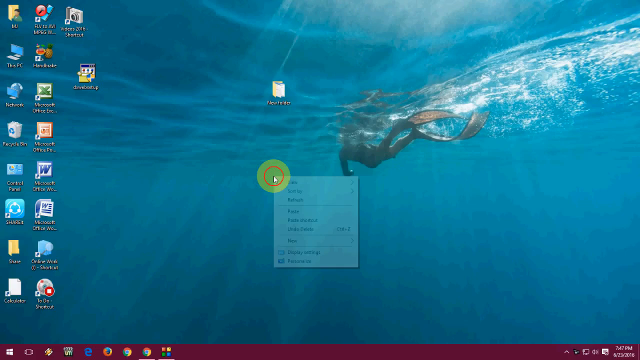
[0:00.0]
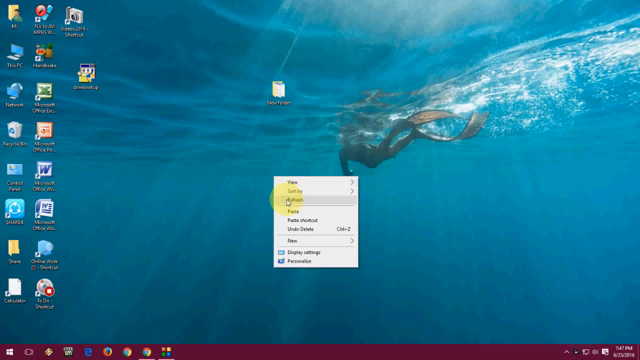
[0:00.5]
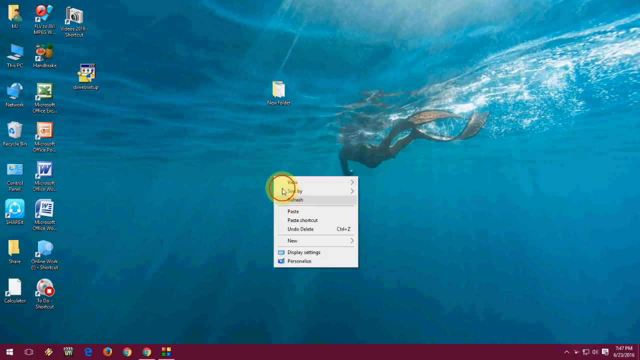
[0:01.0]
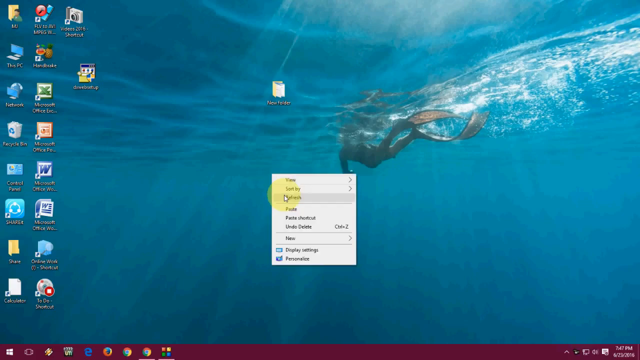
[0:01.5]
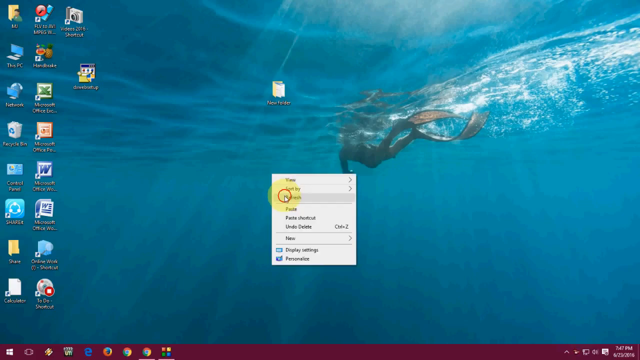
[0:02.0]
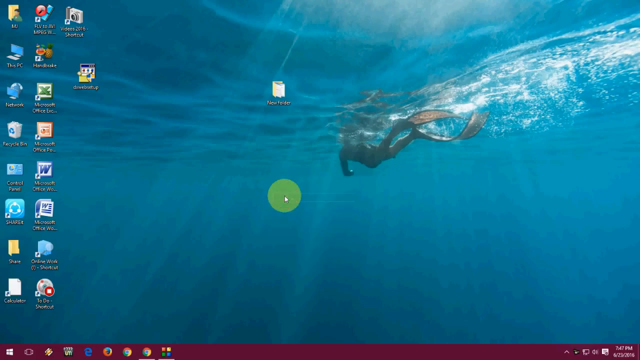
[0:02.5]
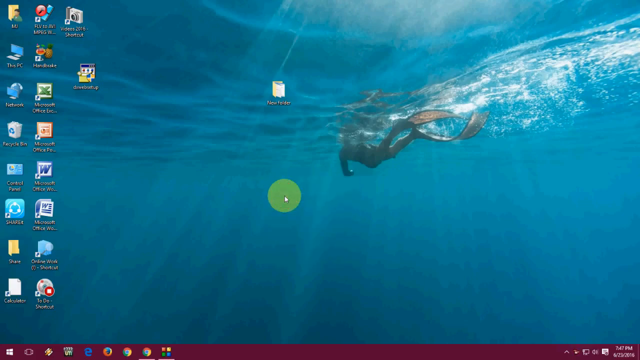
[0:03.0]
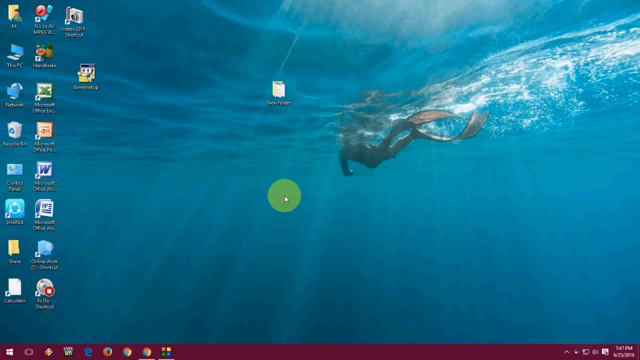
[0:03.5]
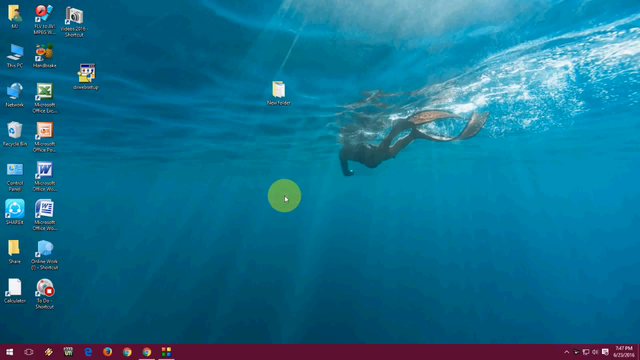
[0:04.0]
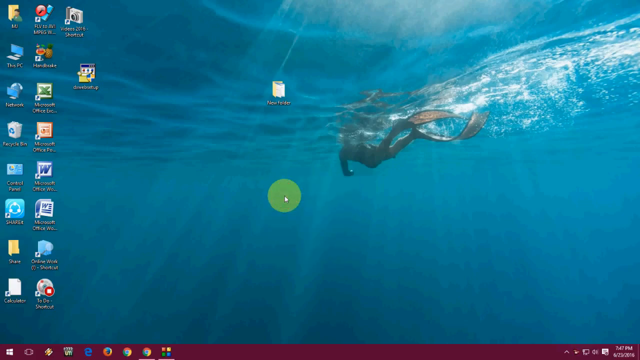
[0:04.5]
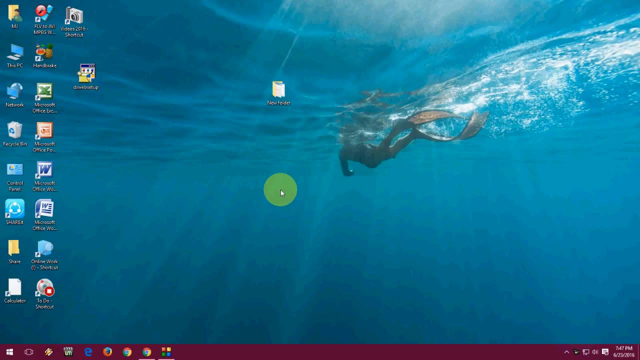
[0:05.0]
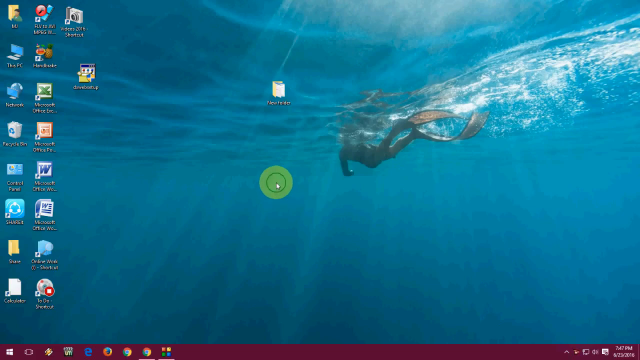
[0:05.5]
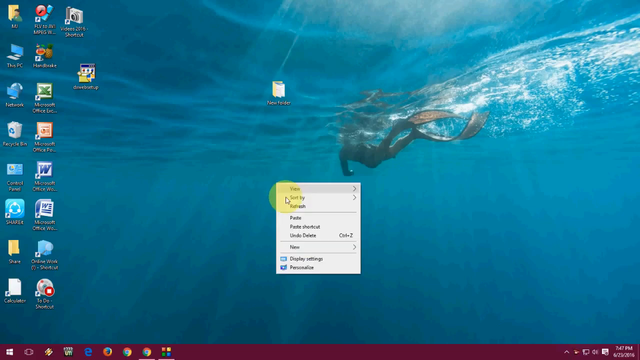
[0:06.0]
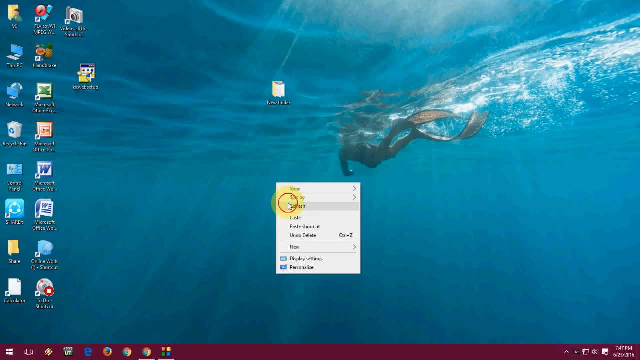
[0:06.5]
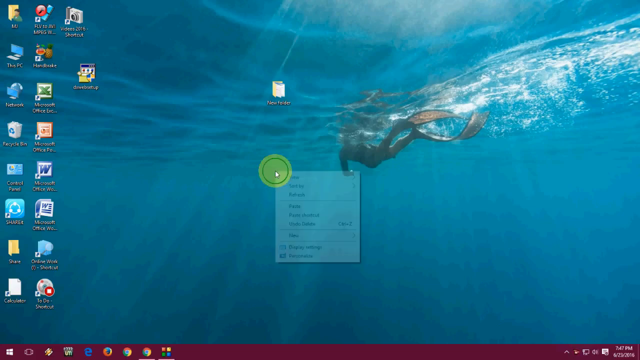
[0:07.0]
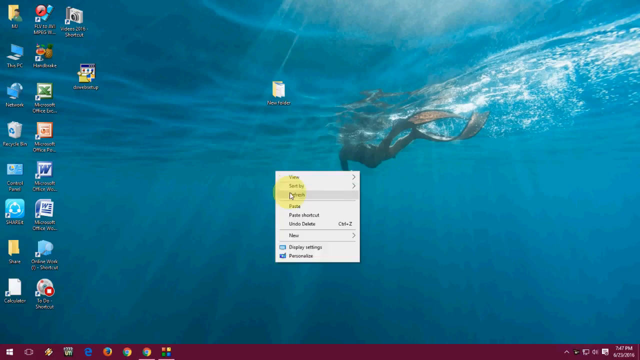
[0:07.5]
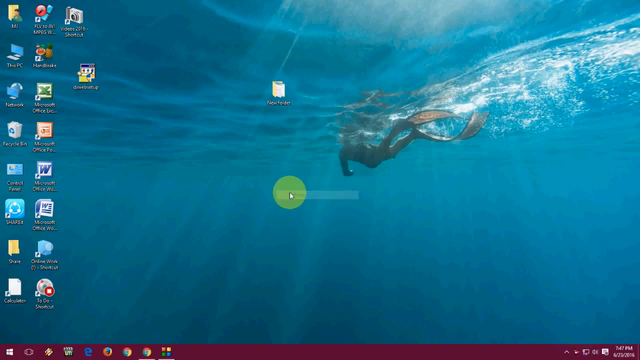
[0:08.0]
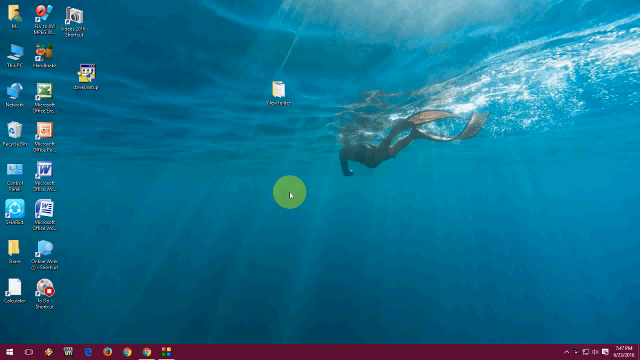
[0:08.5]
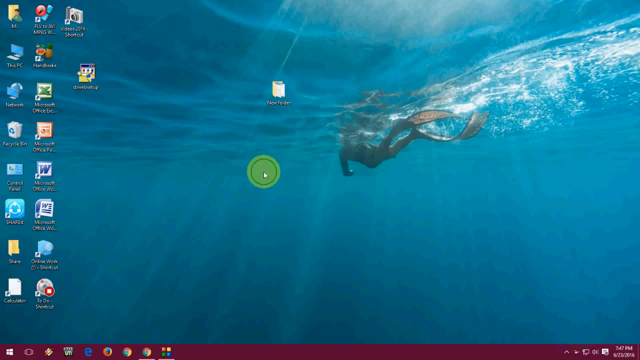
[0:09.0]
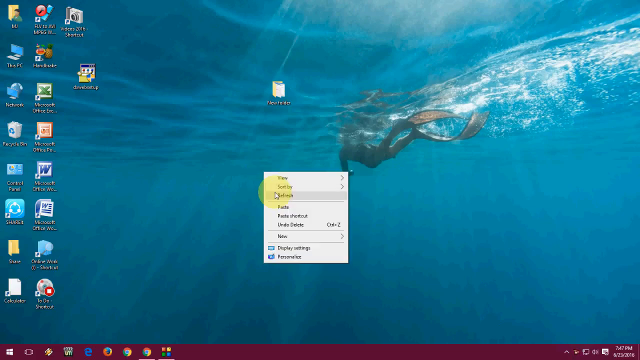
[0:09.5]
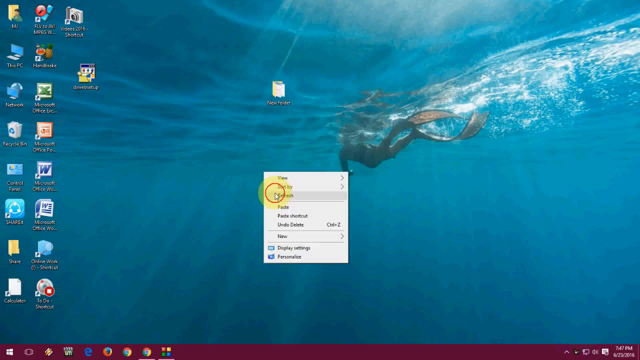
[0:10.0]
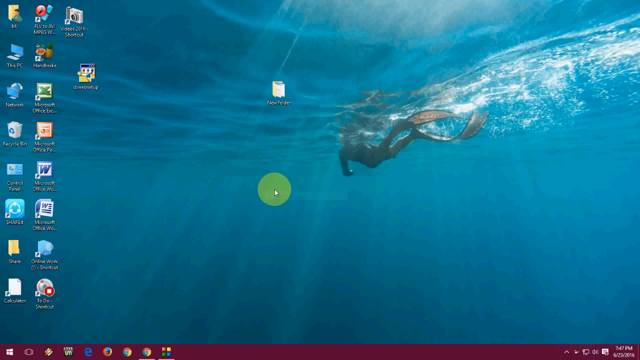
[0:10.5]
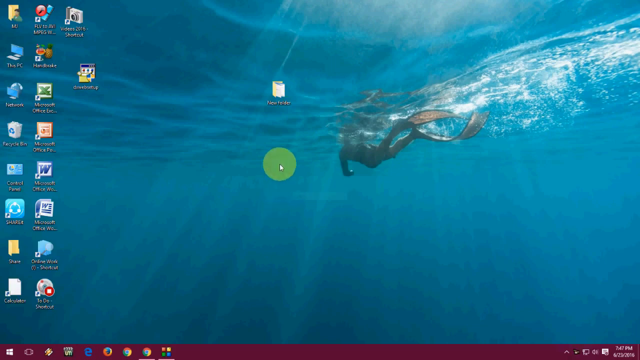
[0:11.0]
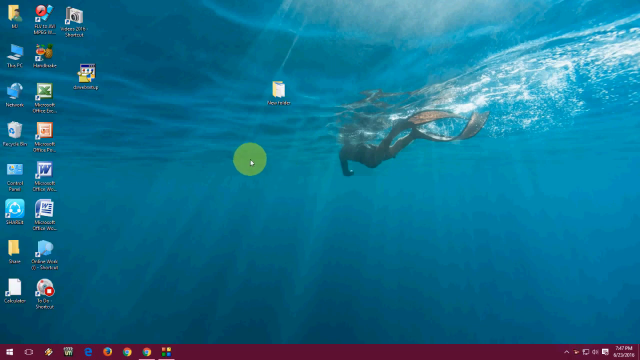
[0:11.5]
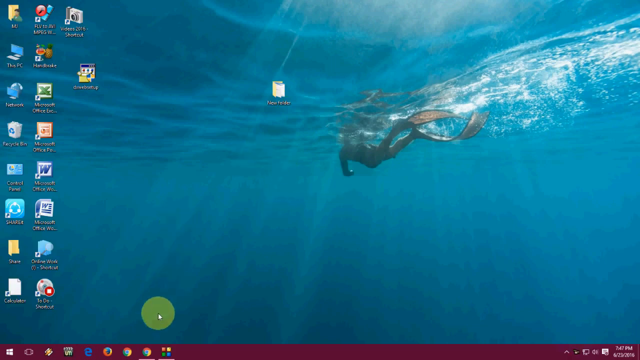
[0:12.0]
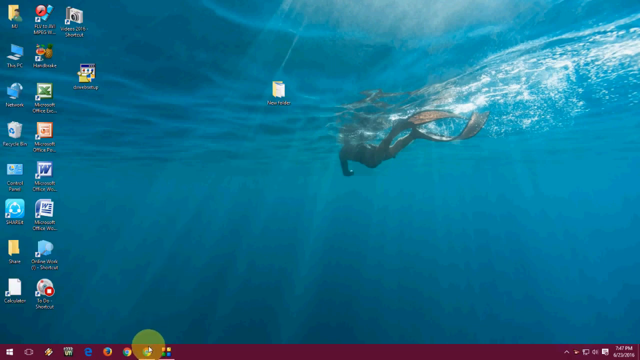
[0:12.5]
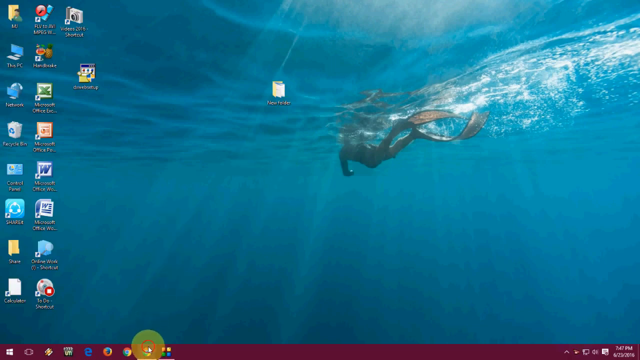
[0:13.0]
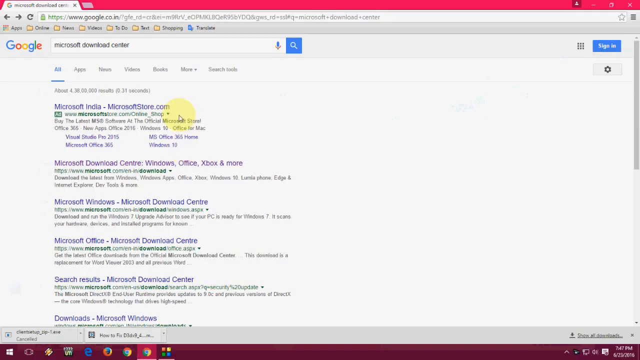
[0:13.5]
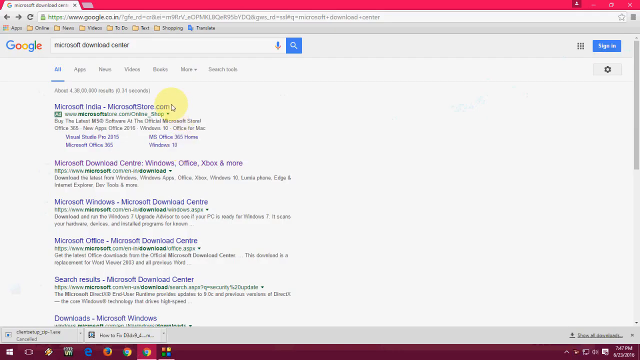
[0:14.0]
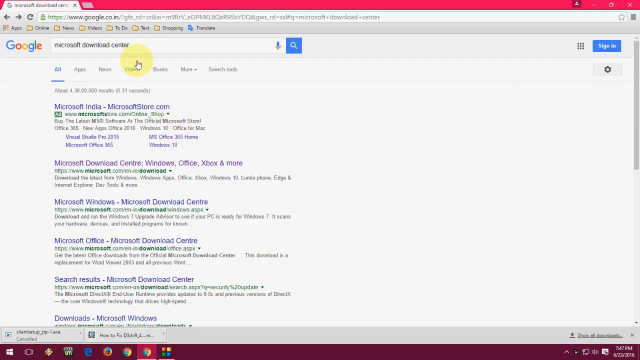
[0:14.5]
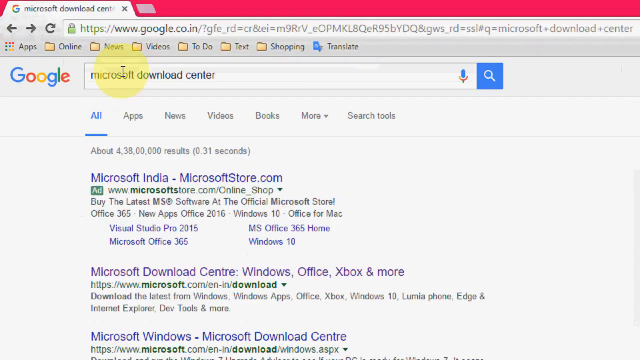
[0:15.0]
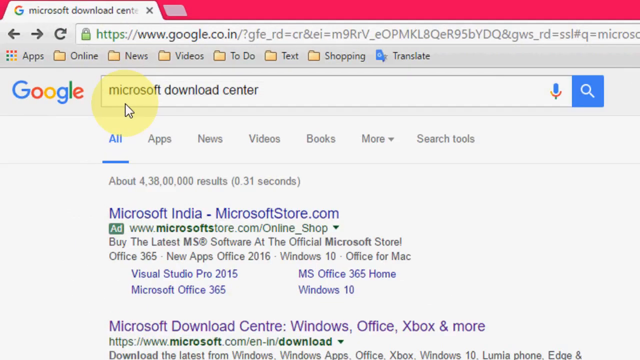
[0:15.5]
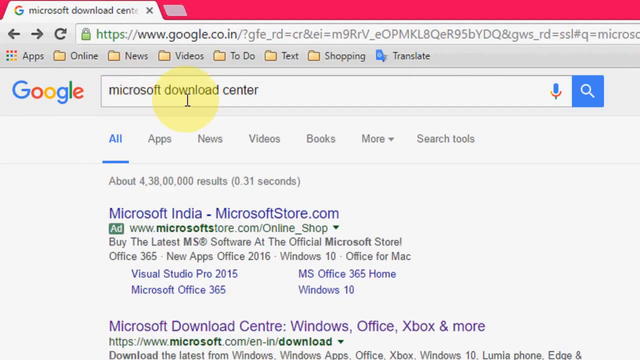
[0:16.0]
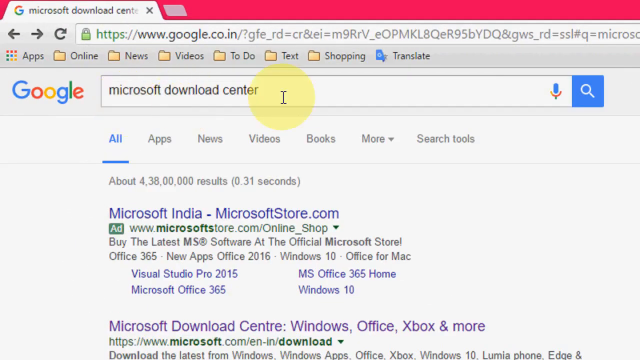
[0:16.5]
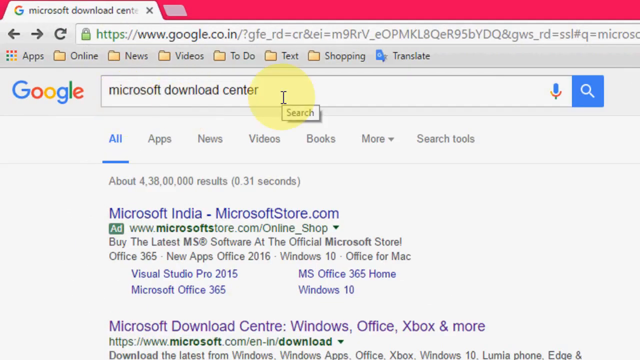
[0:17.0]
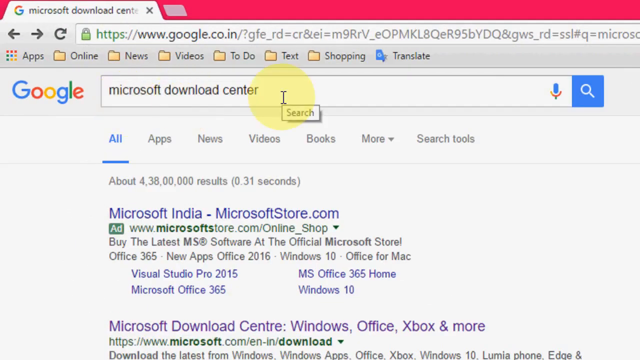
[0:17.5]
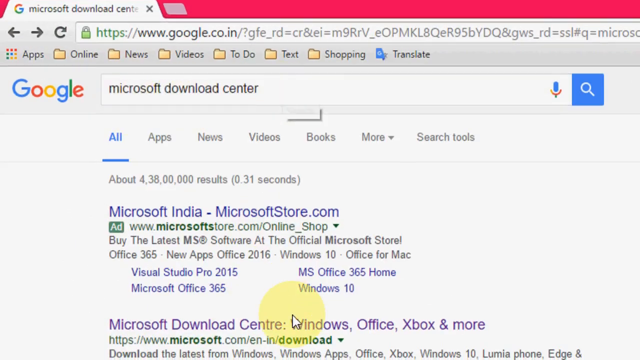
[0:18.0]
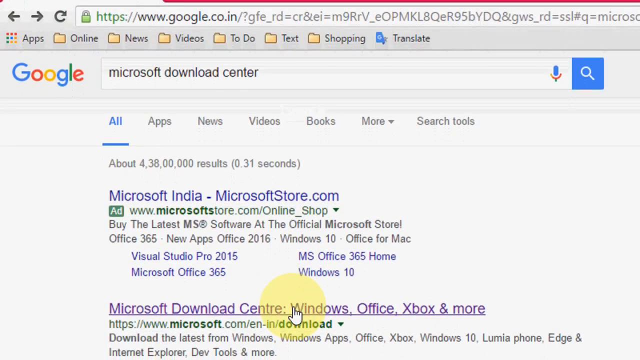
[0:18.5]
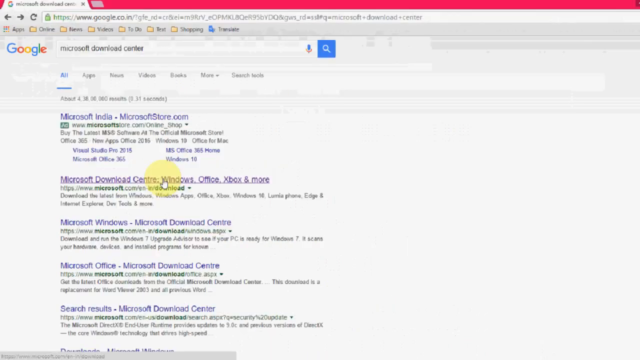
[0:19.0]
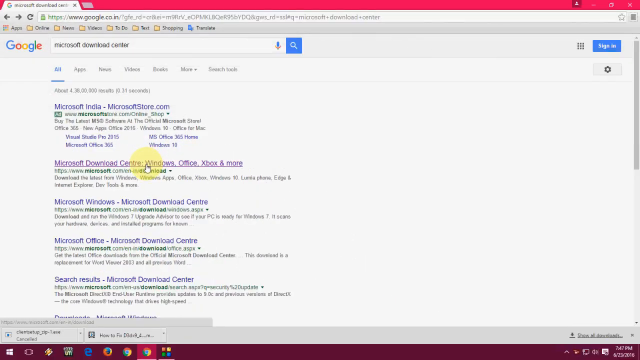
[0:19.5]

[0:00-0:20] A computer desktop fills the view. The background is an underwater image of a snorkeler or scuba diver with flippers, swimming almost at the surface of the water but just underneath, towards the left-hand side but roughly in the center of the image. On the left are icons for various apps and programs, such as the Recycle Bin, This PC, Microsoft Excel, Microsoft Word, Control Panel and, apparently, Microsoft Office PowerPoint. In the center of the screen is a yellow circle with a red circle within it and a white arrow cursor centered, which appears to perhaps right-click and select something. It seems to click refresh over and over, but nothing really seems to change. The cursor then clicks at the bottom and opens a tab that says "Microsoft Download Center", moving the yellow circle, which appears to be over the cursor, to a website.